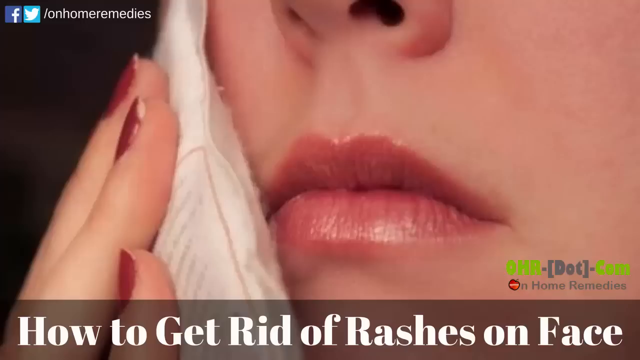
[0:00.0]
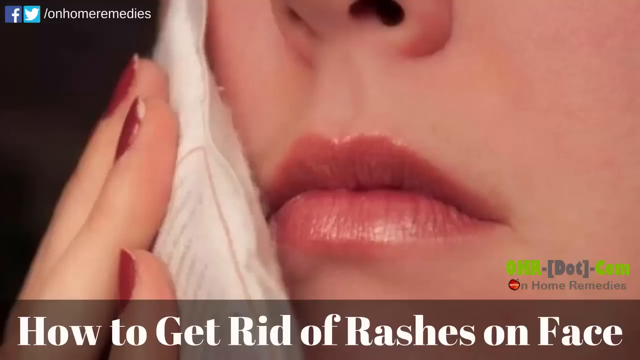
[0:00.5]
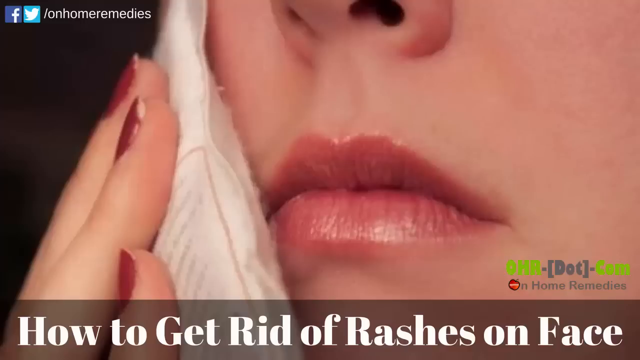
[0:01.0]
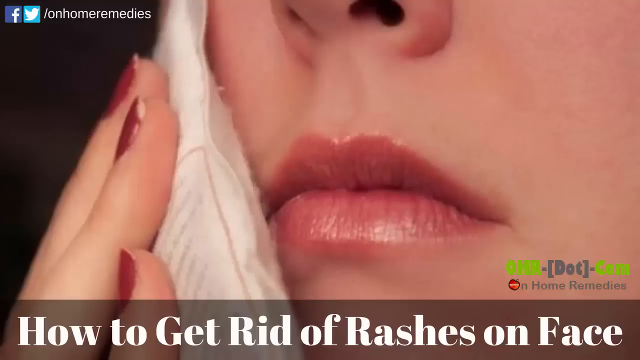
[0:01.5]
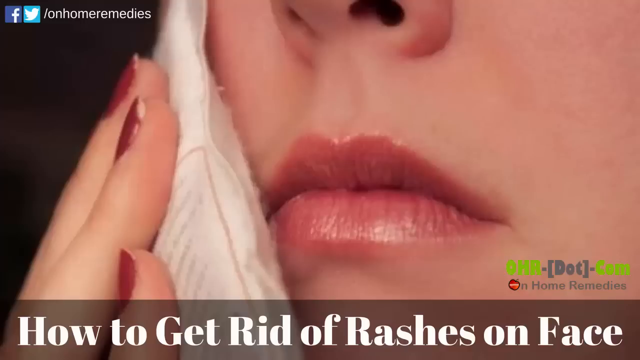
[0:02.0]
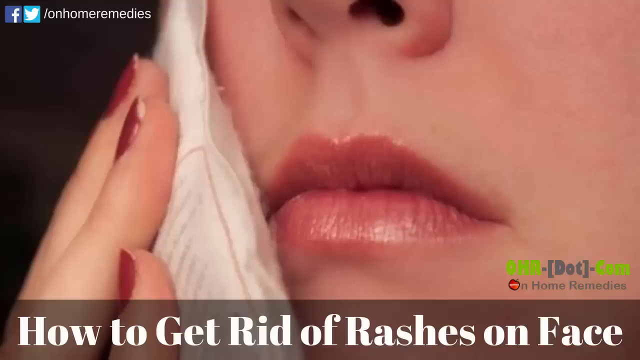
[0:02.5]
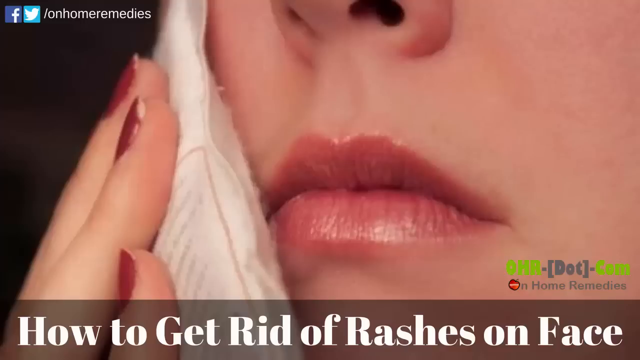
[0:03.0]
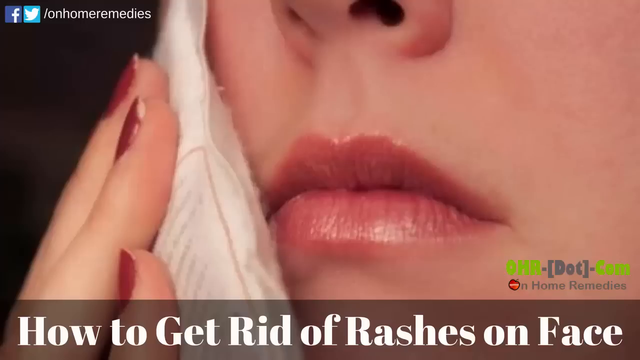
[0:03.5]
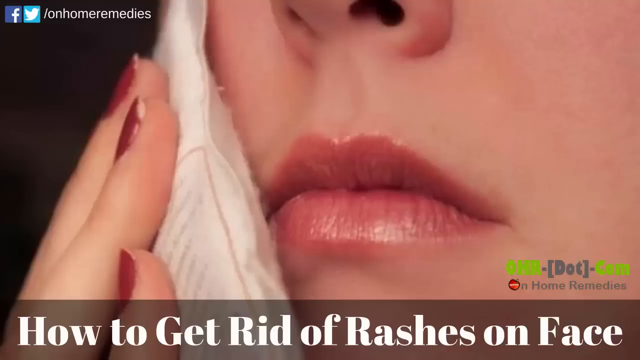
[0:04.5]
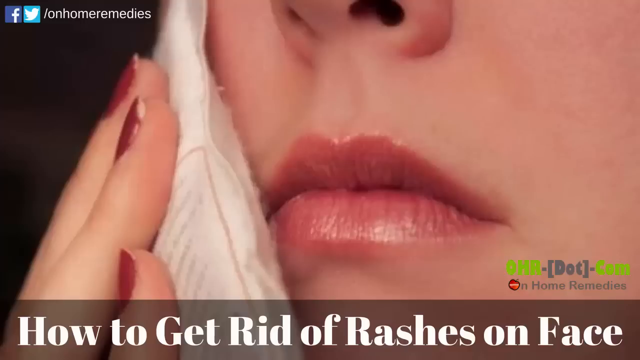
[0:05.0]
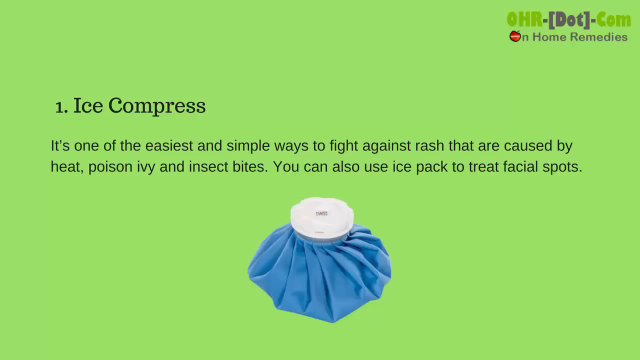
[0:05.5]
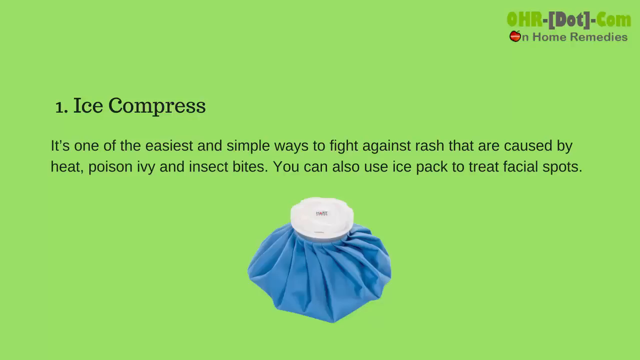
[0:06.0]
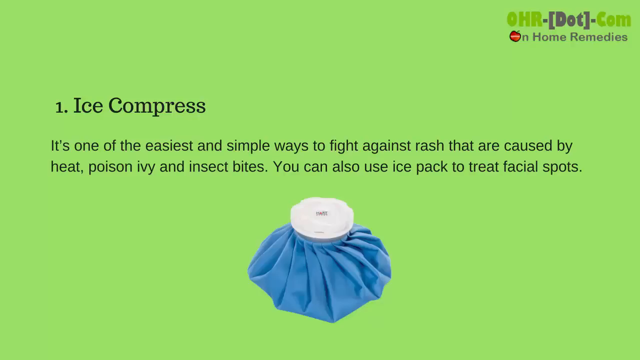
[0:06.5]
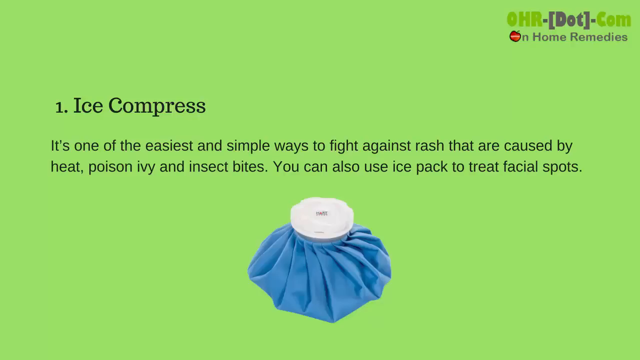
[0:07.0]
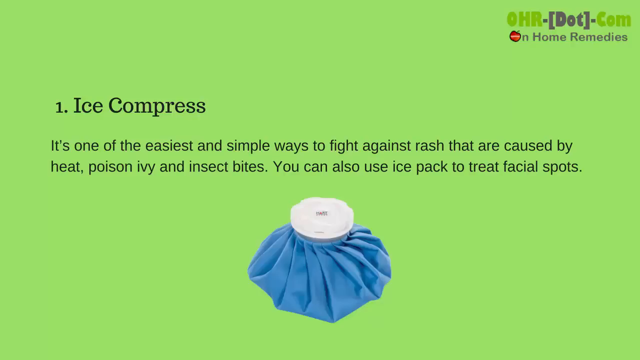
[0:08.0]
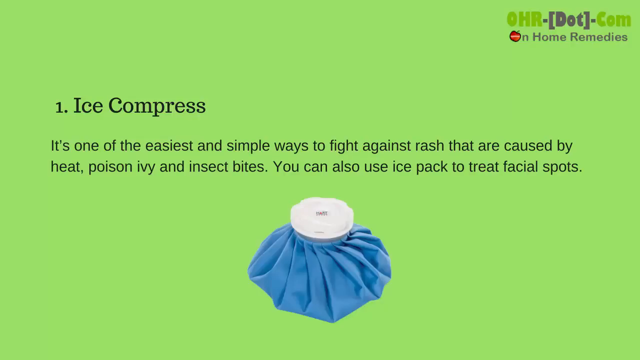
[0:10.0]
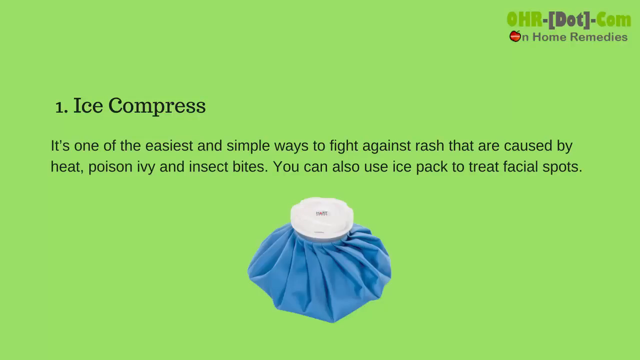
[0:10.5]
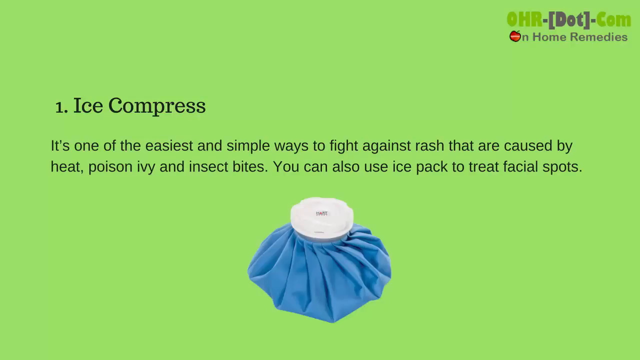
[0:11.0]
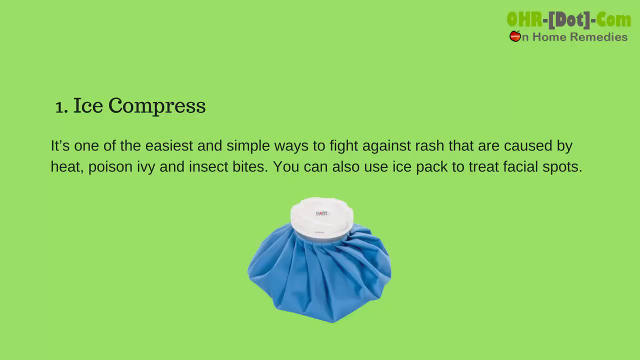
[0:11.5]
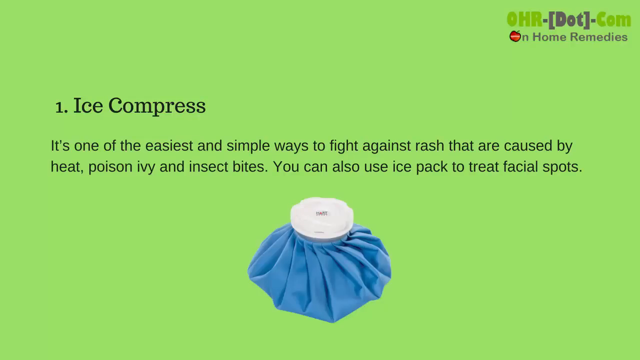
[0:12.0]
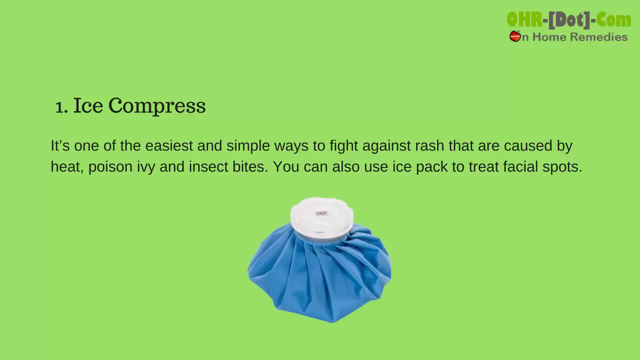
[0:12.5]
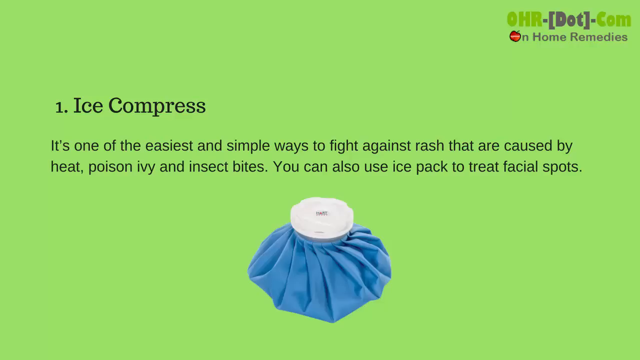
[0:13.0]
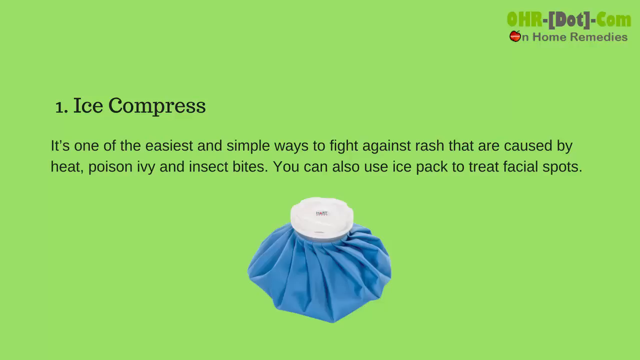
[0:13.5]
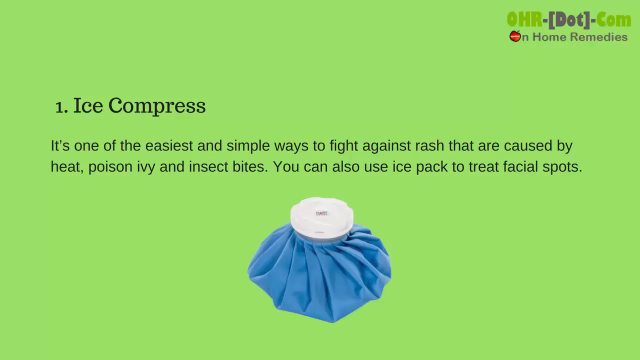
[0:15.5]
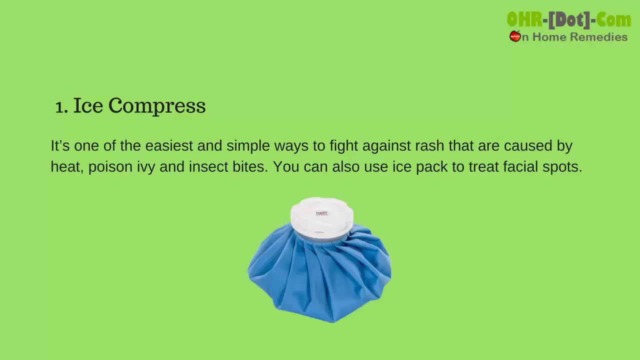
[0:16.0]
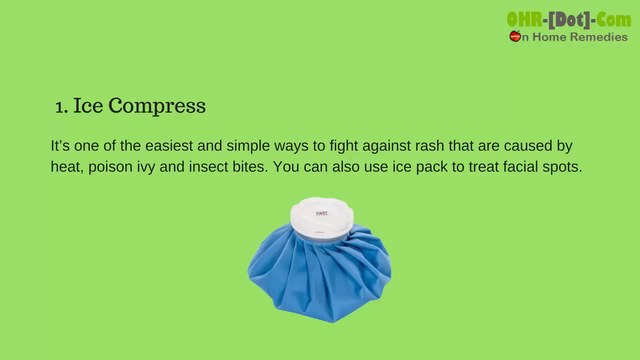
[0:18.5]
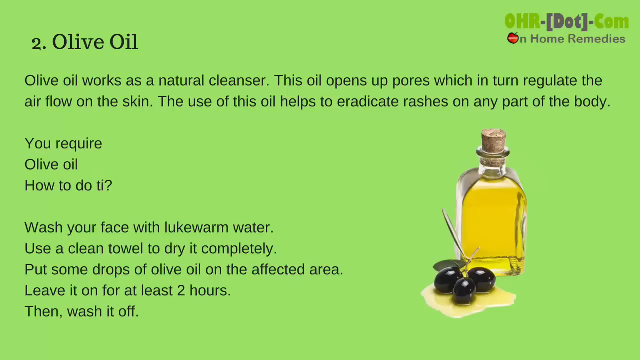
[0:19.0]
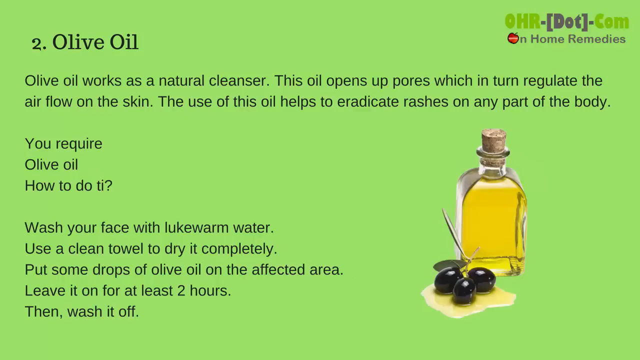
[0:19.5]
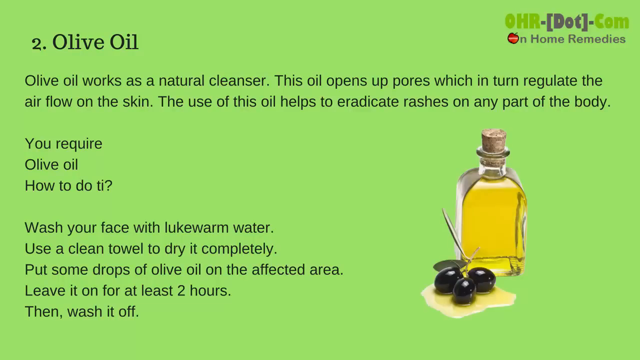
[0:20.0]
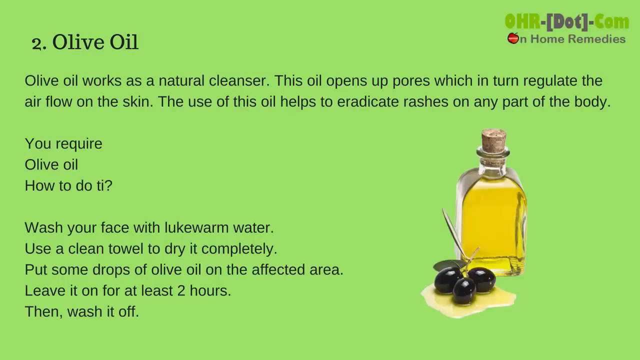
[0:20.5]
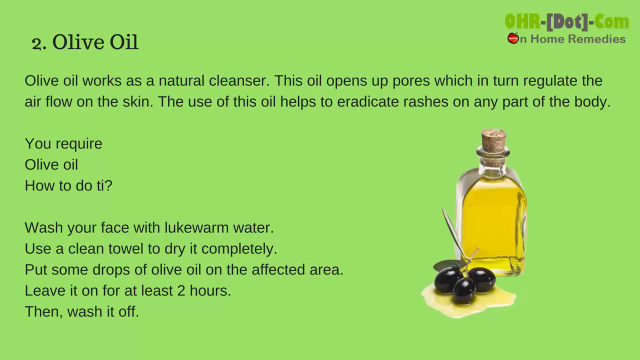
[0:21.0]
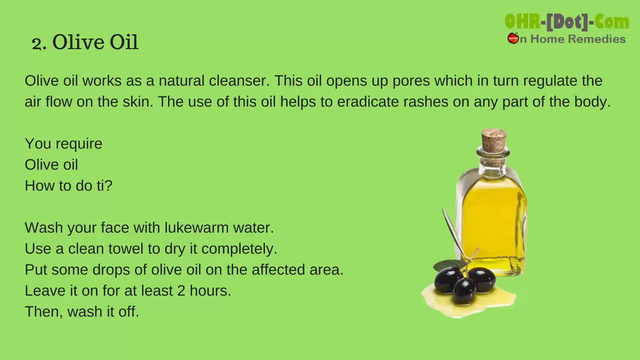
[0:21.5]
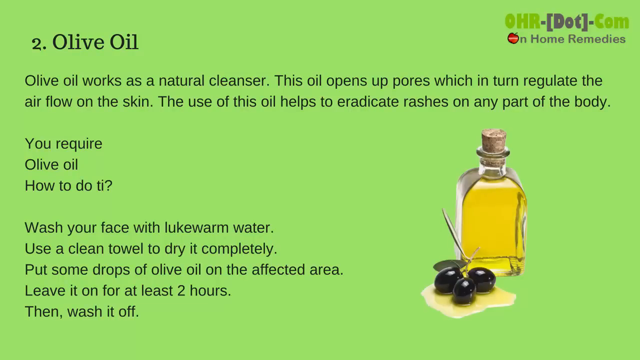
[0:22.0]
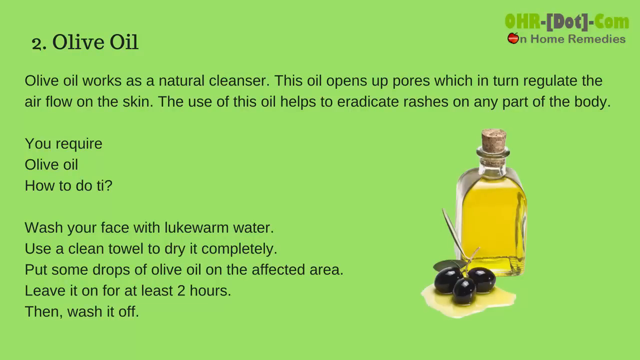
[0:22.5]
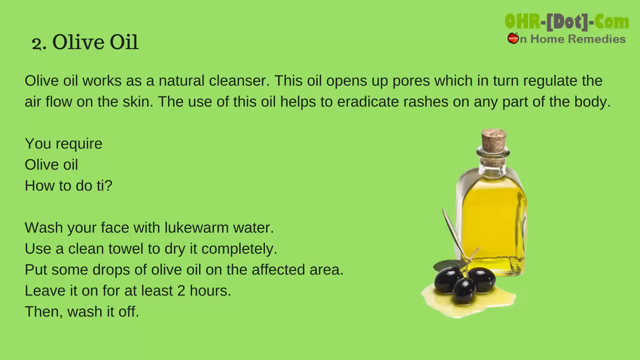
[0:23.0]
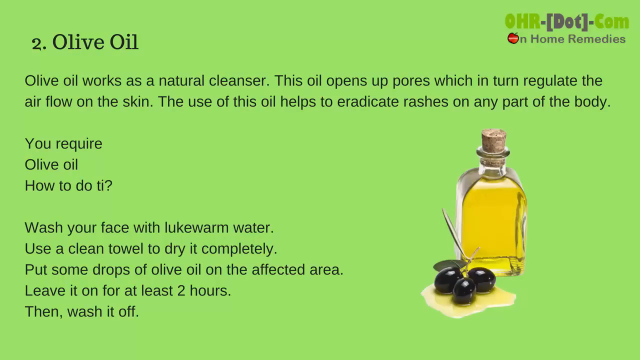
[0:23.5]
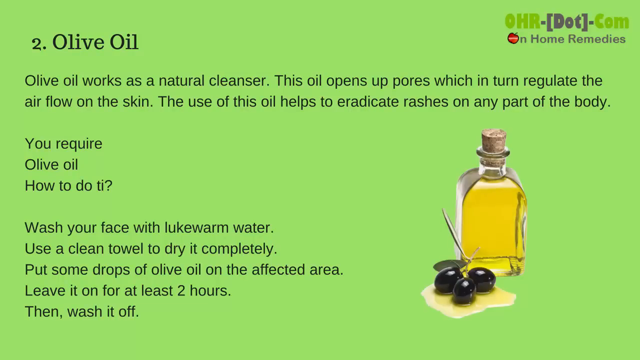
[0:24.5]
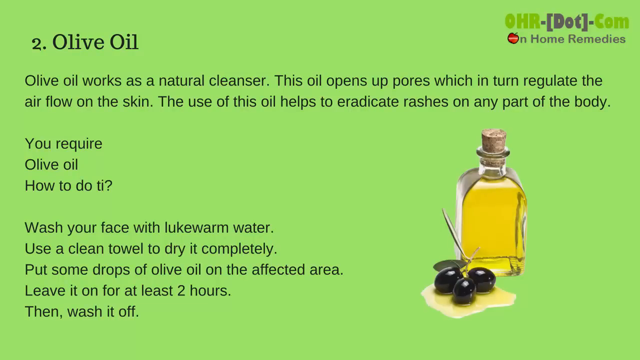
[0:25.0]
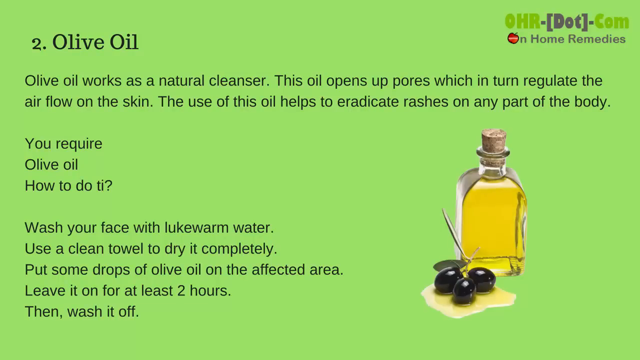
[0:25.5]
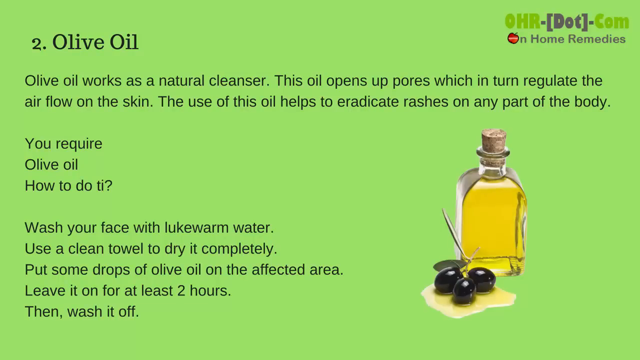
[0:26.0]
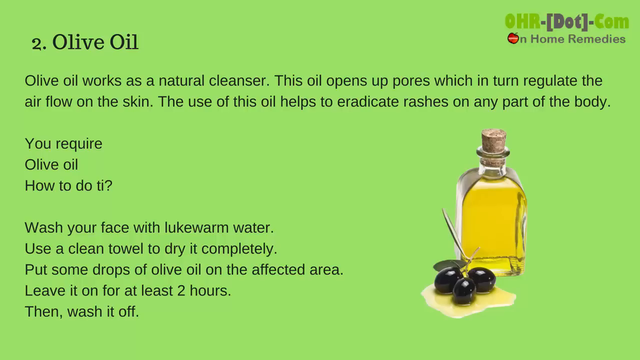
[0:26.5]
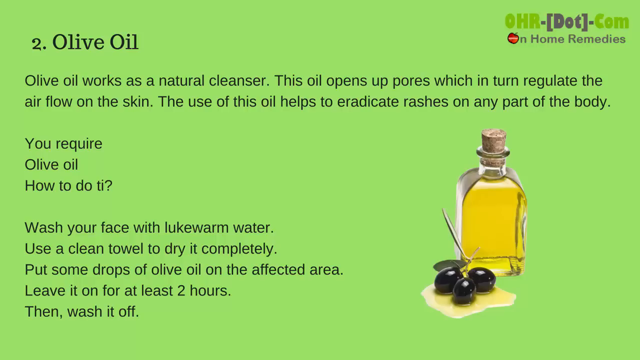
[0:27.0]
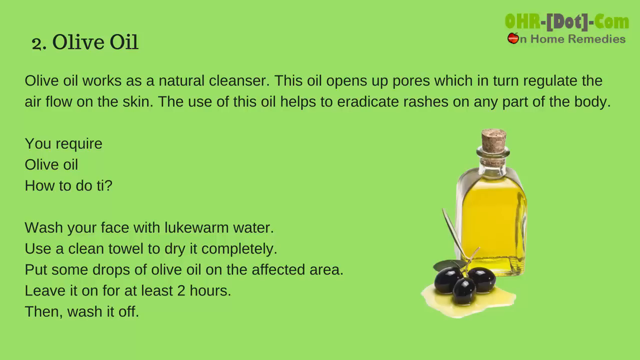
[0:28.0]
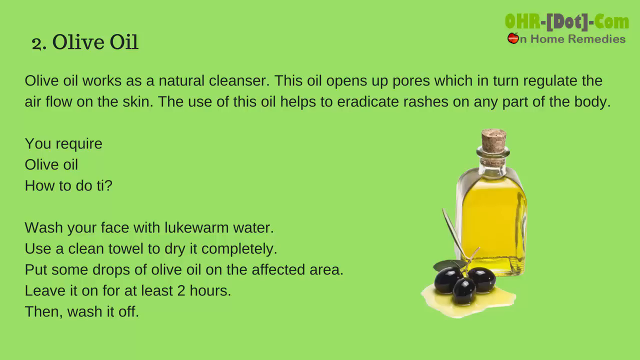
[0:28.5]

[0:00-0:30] The video shows the face of a white woman, then a towel on her face. A blue thing appears, and a logo credits the design to a website. Olive oil is shown, with text saying that olive oil works like a natural cleanser, describing how to get rid of pores, and calling it one of the easiest and simplest ways to fight rashes caused by heat and poison ivy. Written steps say that olive oil is required, to wash the face with lukewarm water, and to use a clean towel to dry completely.